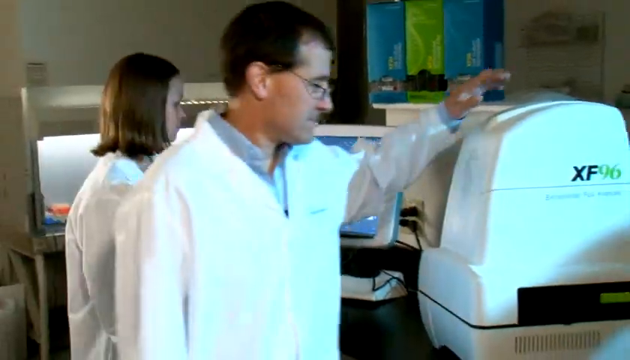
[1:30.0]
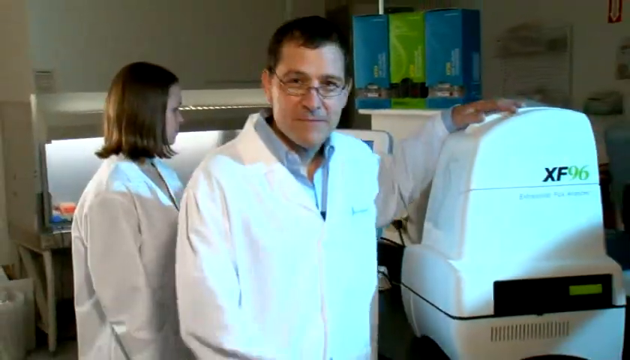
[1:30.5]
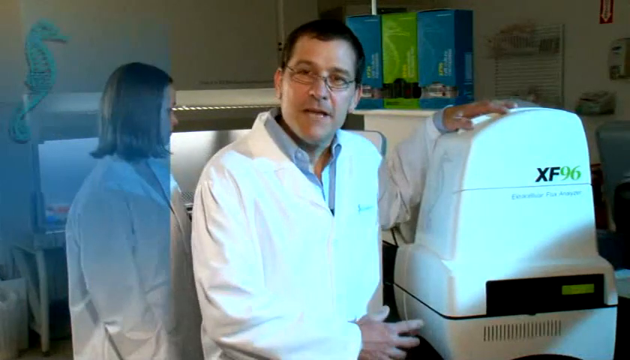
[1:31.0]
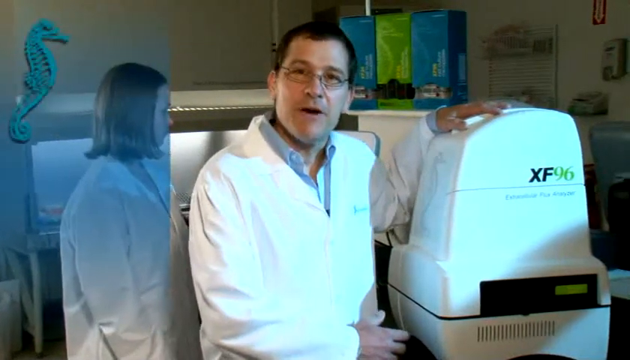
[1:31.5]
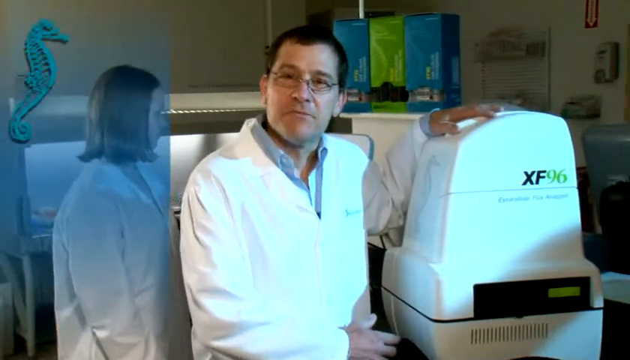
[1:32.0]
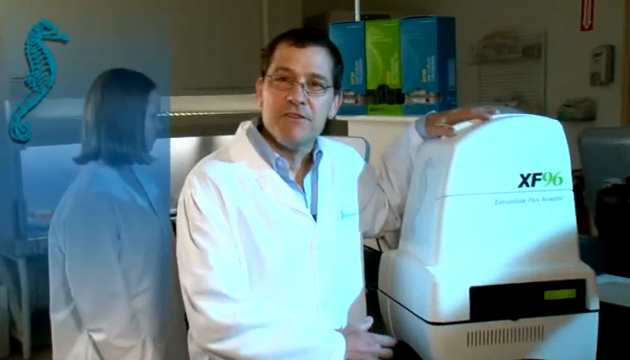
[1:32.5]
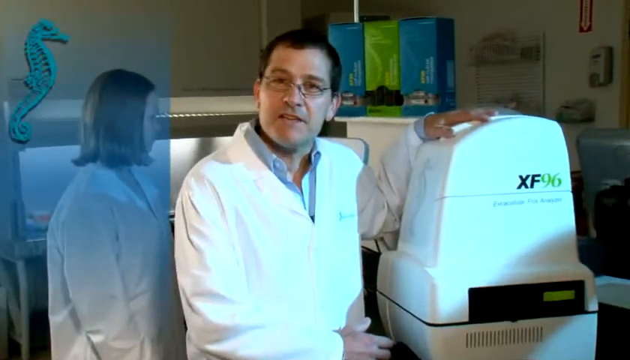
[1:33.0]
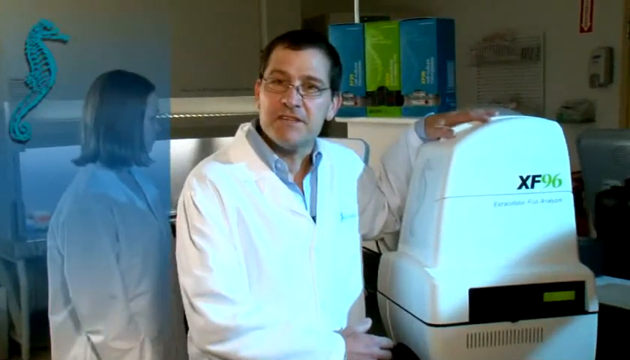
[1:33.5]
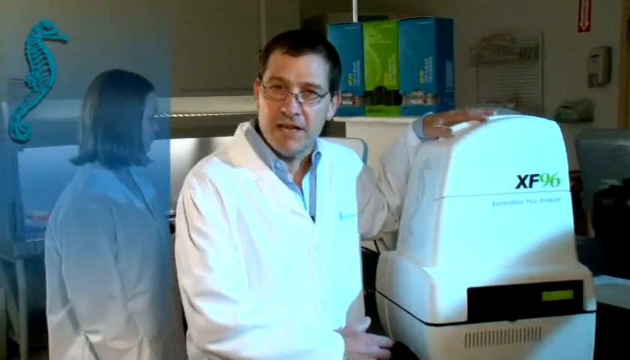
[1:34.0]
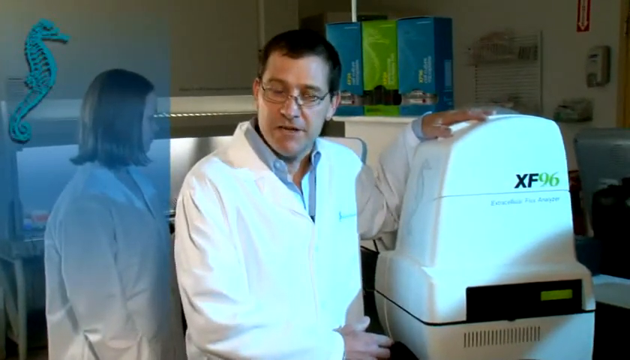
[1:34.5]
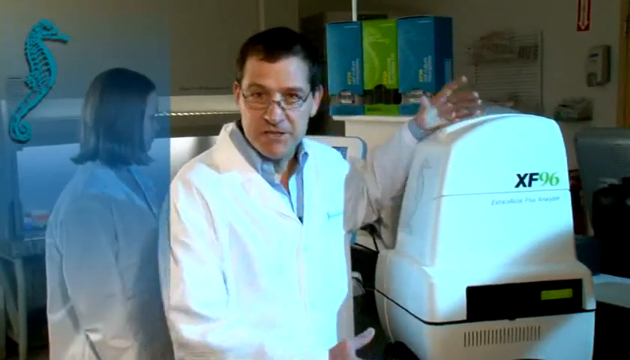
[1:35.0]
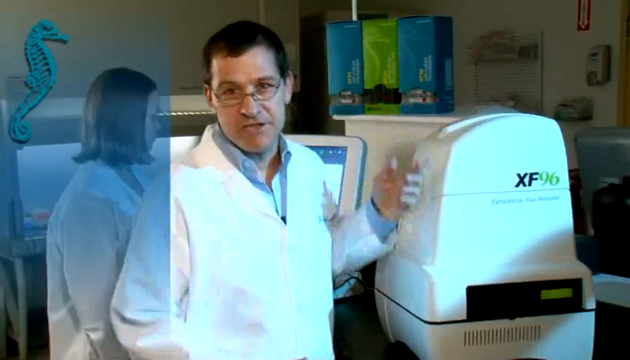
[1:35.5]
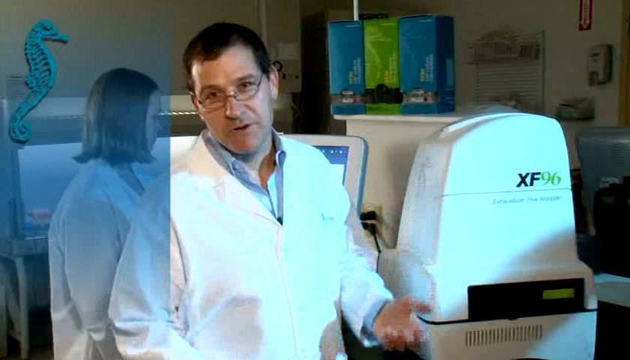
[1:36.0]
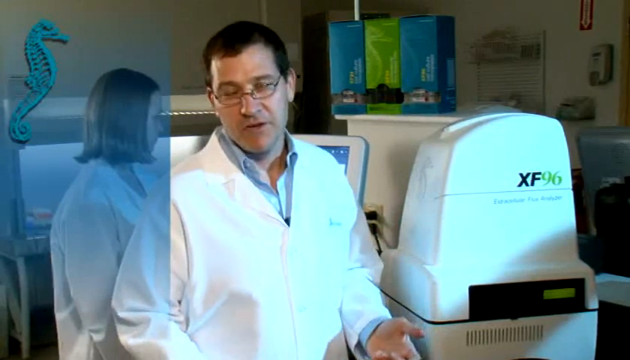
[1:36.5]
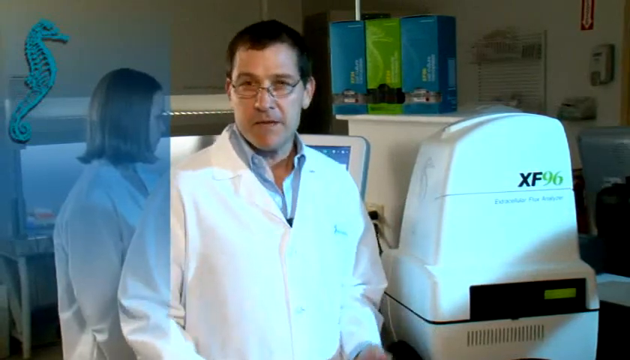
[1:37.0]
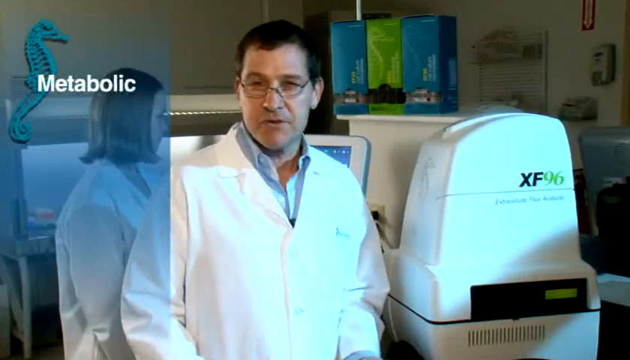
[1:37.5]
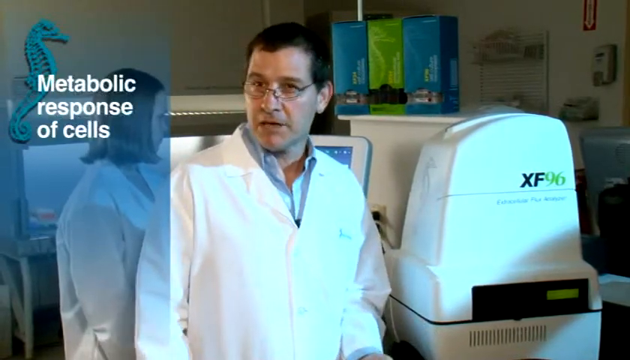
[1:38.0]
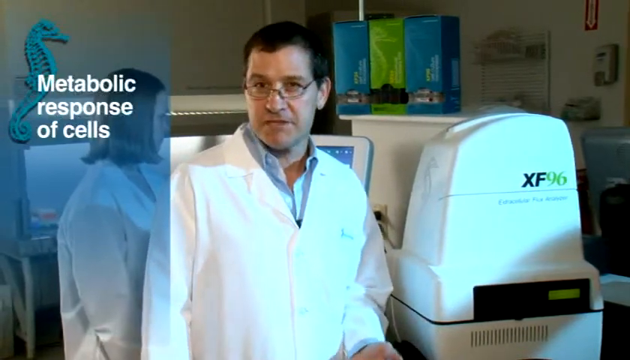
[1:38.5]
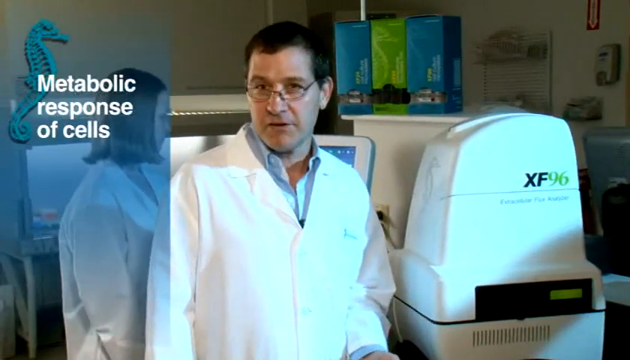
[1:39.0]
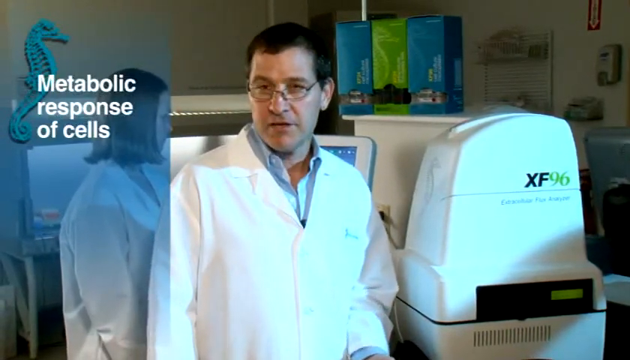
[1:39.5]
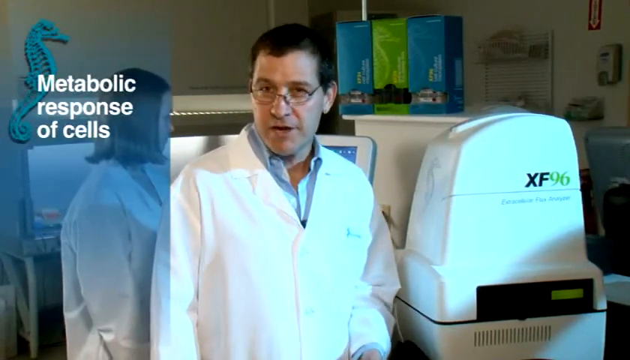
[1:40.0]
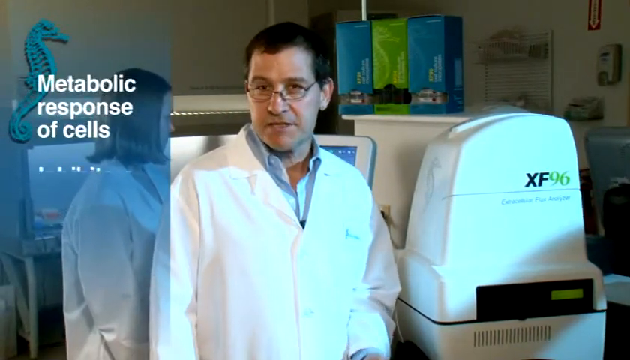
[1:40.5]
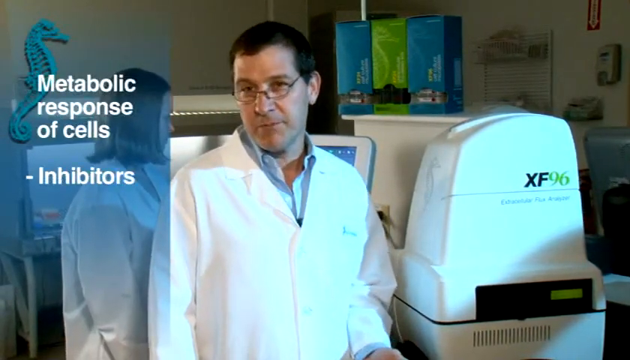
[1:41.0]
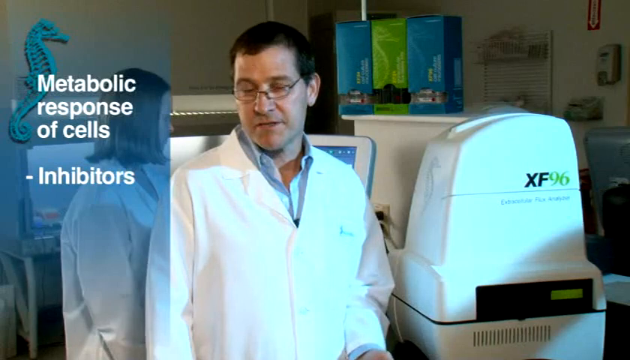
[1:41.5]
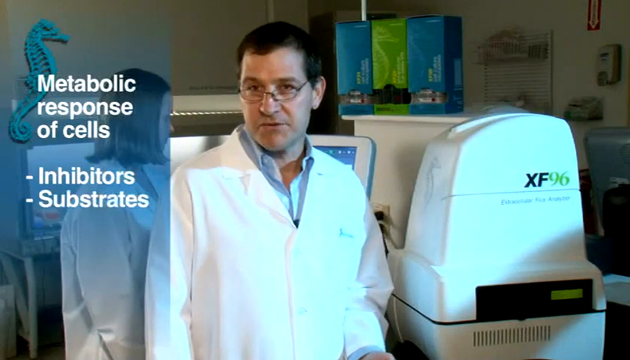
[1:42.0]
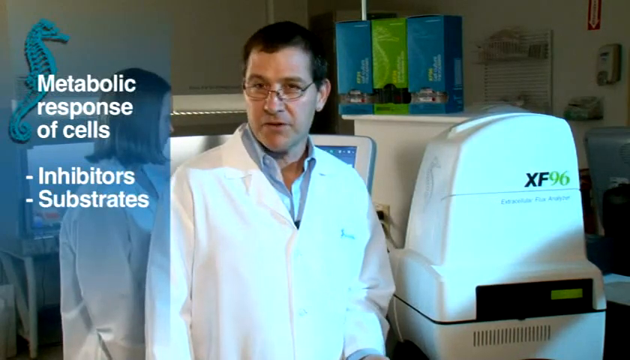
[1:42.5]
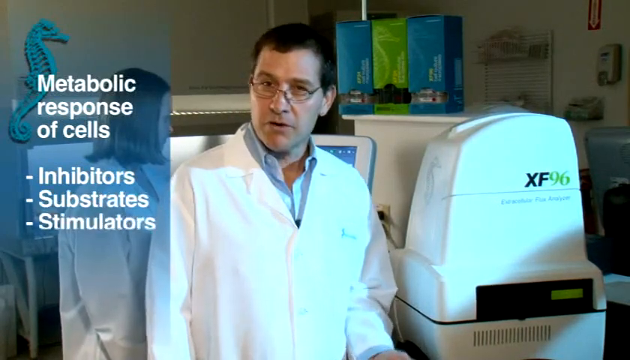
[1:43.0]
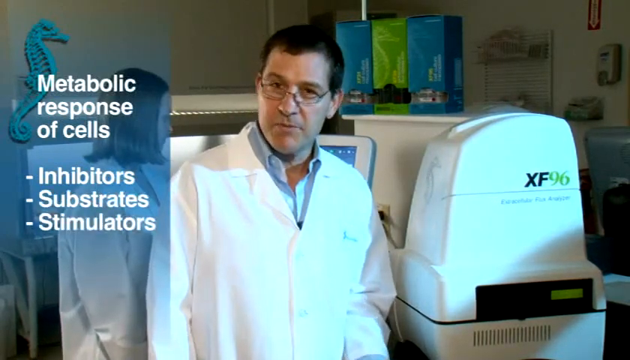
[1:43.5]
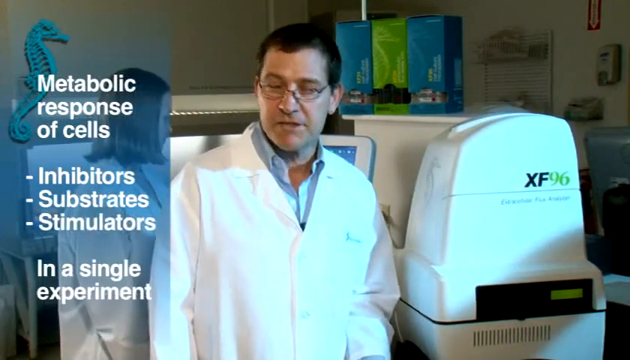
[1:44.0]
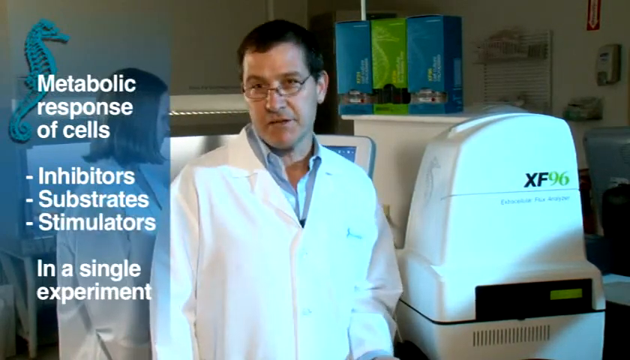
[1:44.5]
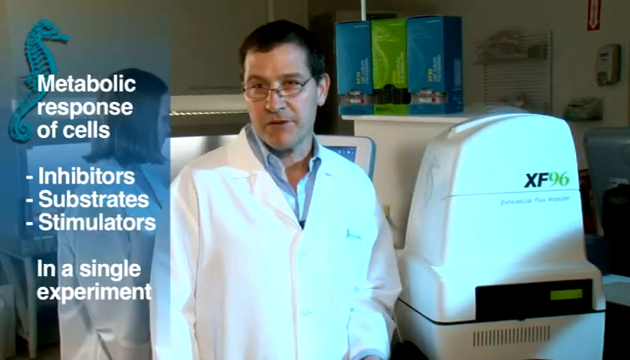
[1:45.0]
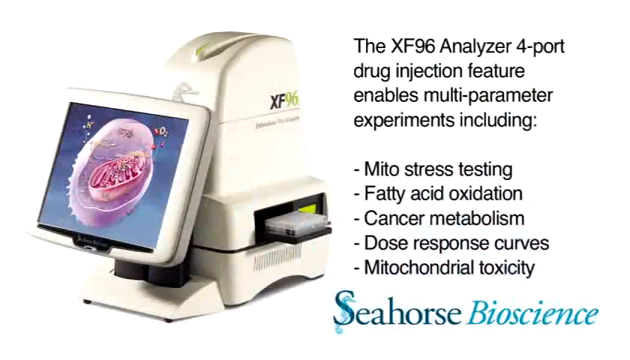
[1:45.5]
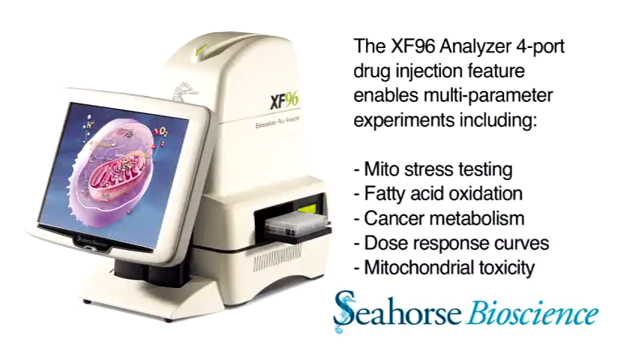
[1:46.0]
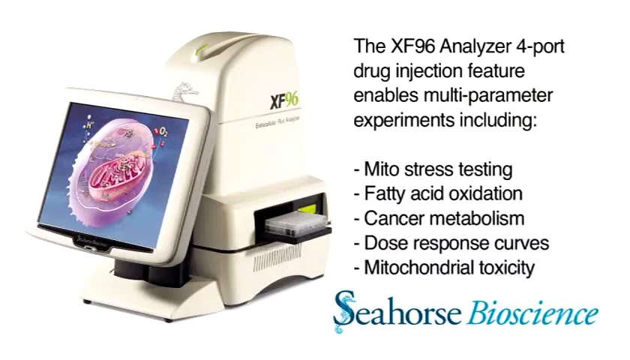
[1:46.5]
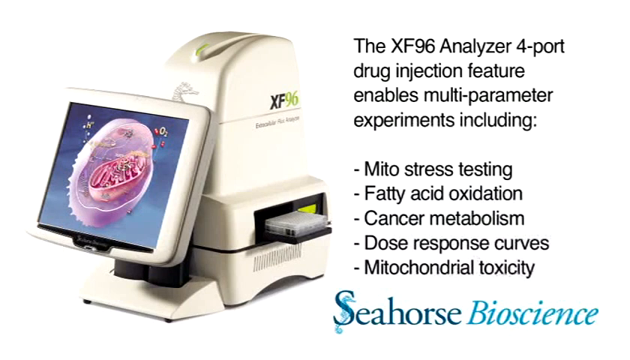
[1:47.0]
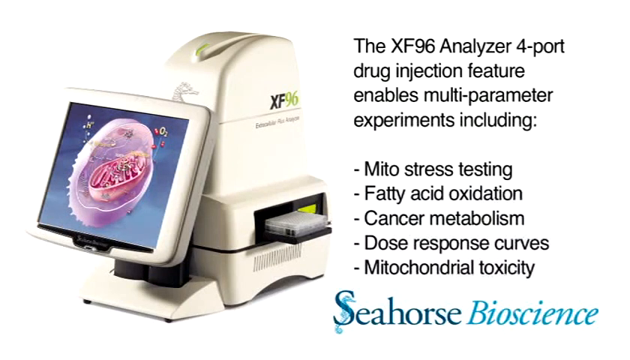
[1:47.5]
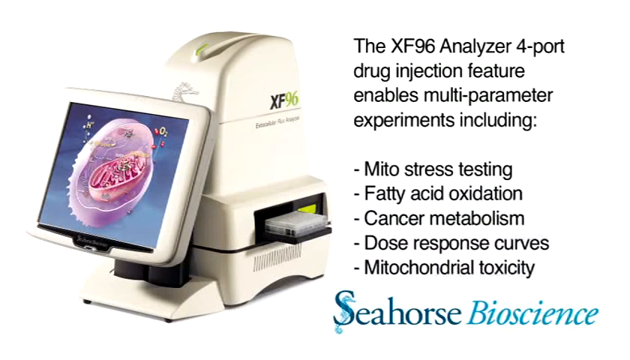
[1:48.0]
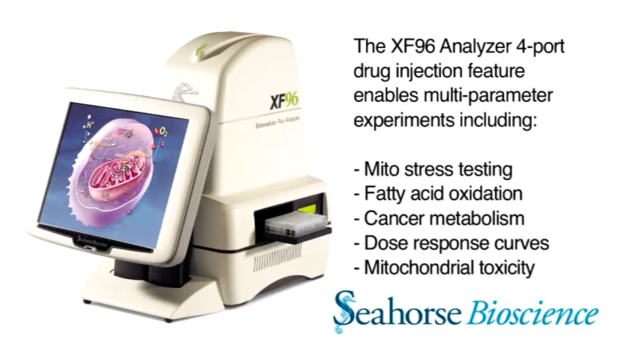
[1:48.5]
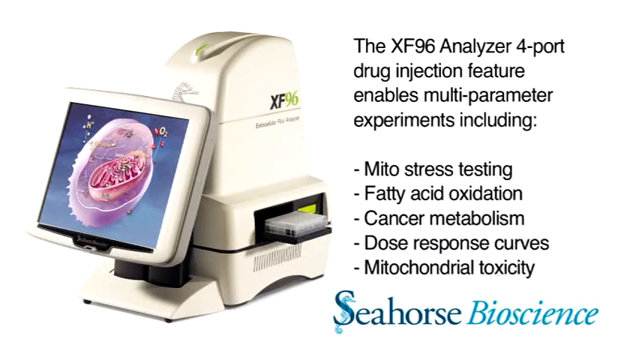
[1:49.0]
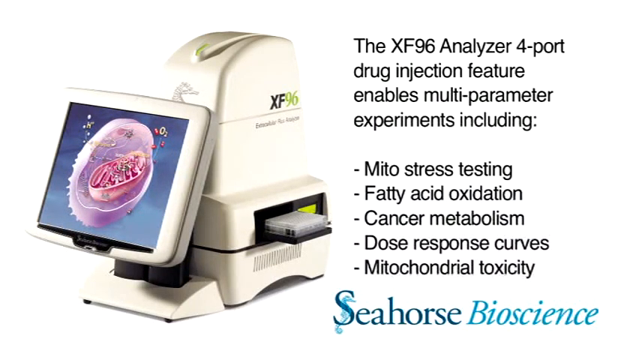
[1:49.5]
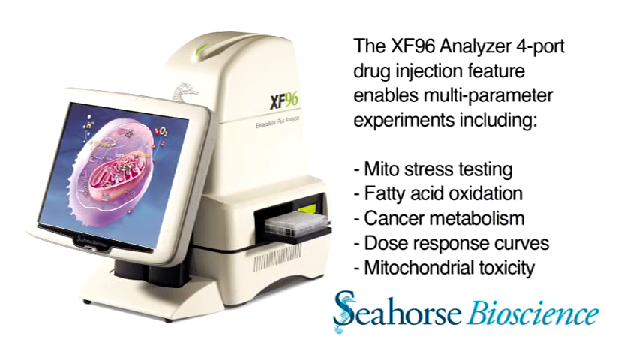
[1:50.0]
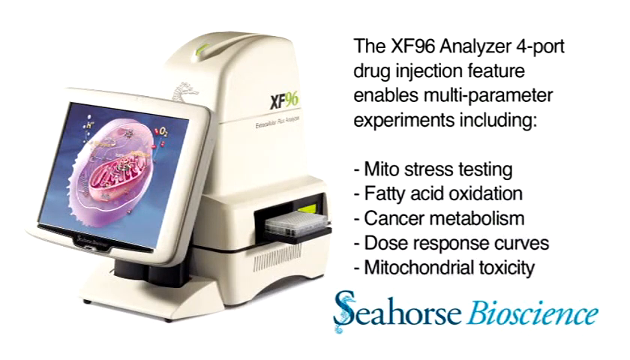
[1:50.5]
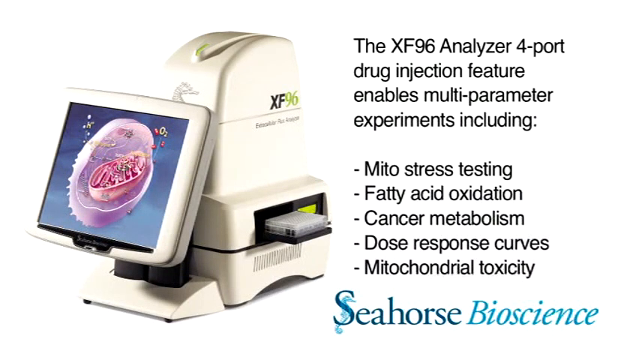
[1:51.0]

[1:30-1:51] There appear to be two scientists, a woman on the left and a man in the middle. The woman is in the background, looking to the right into a monitor in the background. The man is in the foreground and looks like he is looking to the right at a machine on the right side of the video that has the words "XF-96" on it; it looks like an oval white machine about one meter tall. Both wear lab coats. The woman has short hair down to her shoulders that is curled upward. The man has short black hair, glasses, and a light blue shirt under his white lab coat. He puts his left hand on top of the machine and turns to his right to face the viewer. With his right hand around his waist he gestures toward the machine while talking with his left hand on the machine, then he takes his left hand down, puts it in front of him, and gestures with it. On the left side there is a transparent vertical blue rectangle with a seahorse at its top left and white text reading "metabolic response of cells", followed by bullet points that appear one by one: "inhibitors", "substrates", "stimulators", and then "in a single experiment". The man is still talking. The video then transitions to a white screen with the machine on the left side; it looks like it says XF96 on it, with a monitor on its left side, and at its bottom right there looks like a hole to put in test tubes. Black text on the right side of the video, starting at the top right, reads "the XF96 analyzer four-part drug injection feature enables multi-parameter experiments, including mito stress testing, fatty acid oxidation, cancer metabolism, dose response curves, mitochondrial toxicity". At the bottom right, blue text reads "seahorse bioscience", with a seahorse behind the S of seahorse.